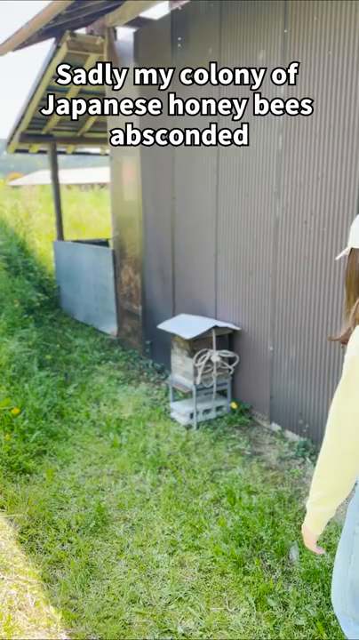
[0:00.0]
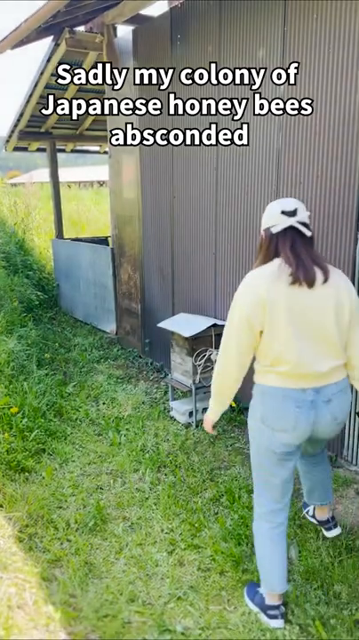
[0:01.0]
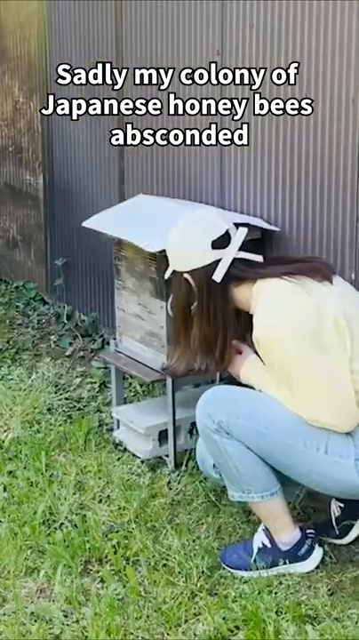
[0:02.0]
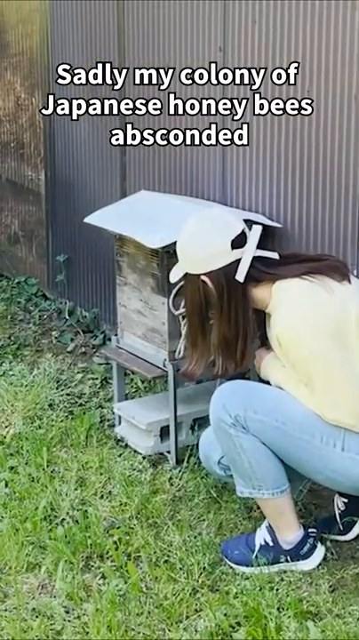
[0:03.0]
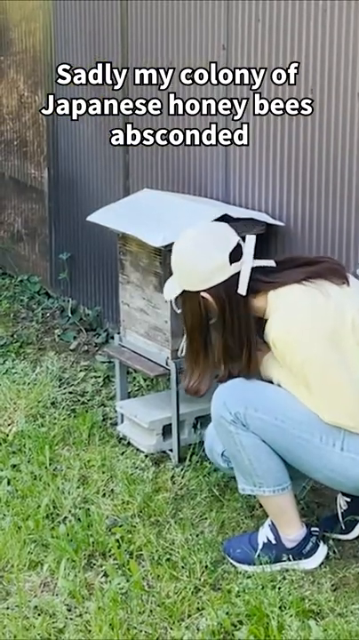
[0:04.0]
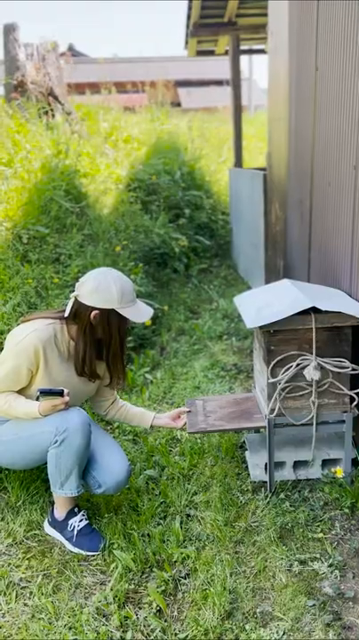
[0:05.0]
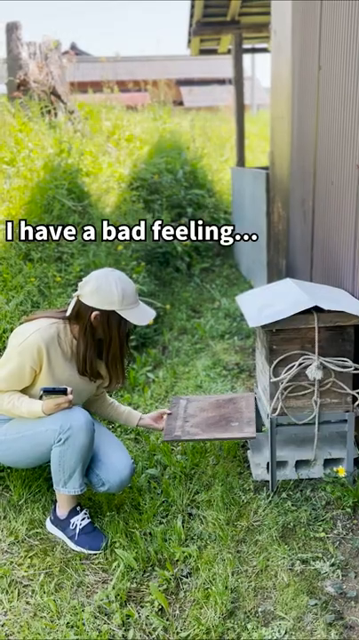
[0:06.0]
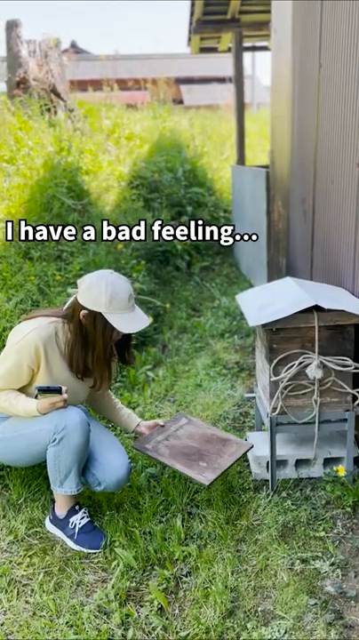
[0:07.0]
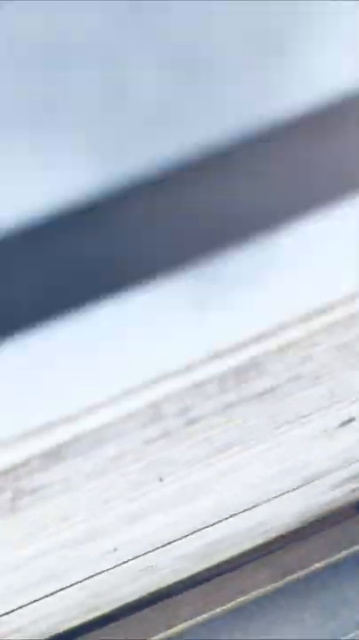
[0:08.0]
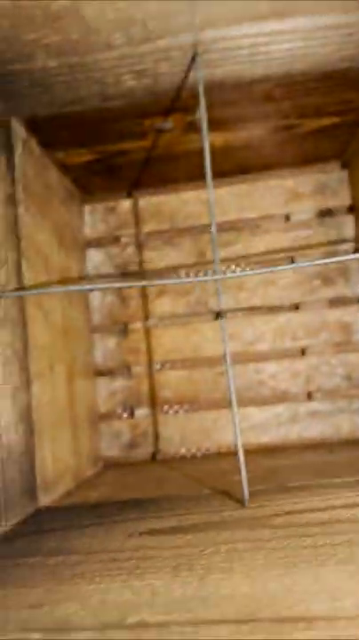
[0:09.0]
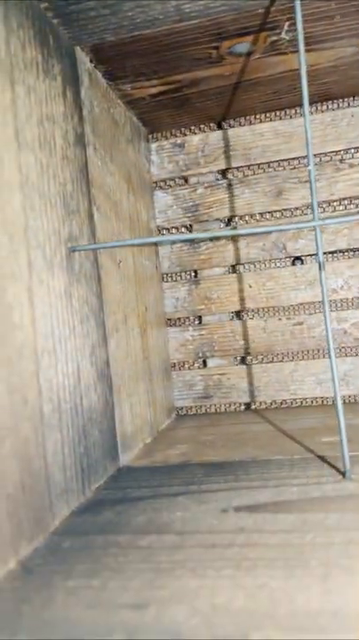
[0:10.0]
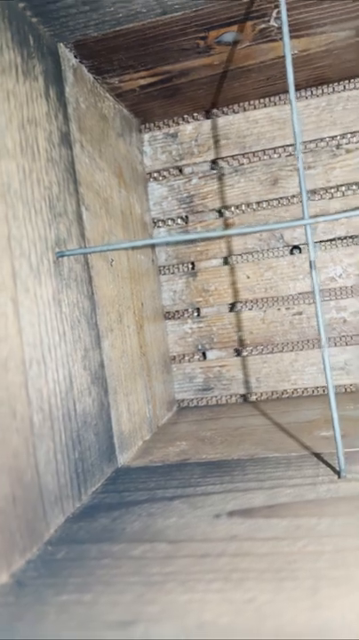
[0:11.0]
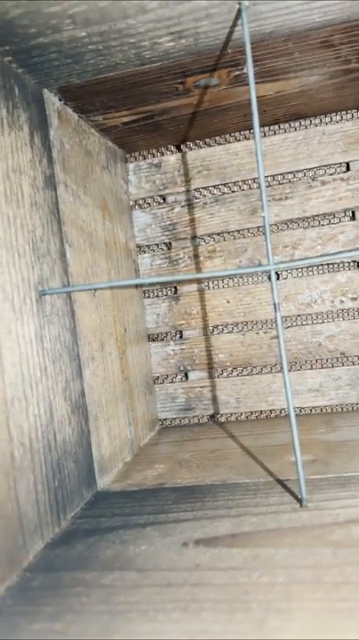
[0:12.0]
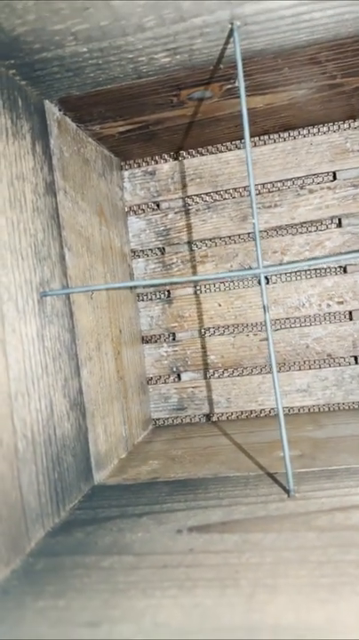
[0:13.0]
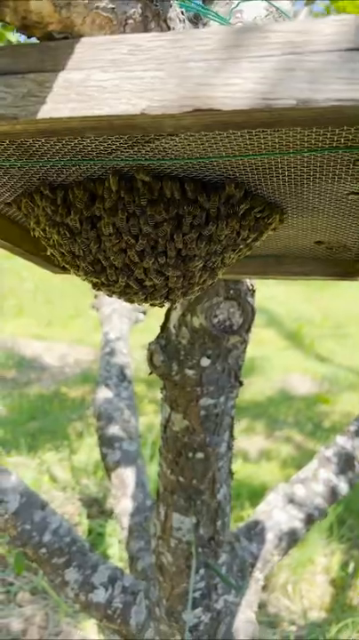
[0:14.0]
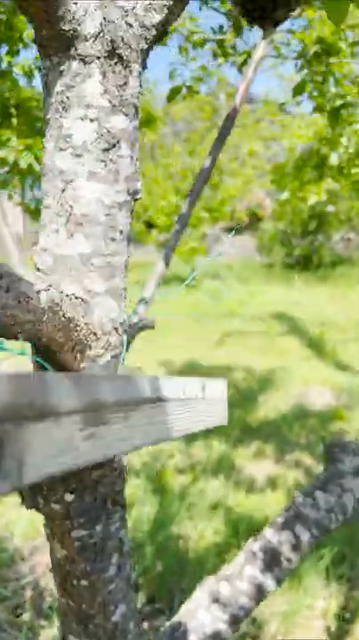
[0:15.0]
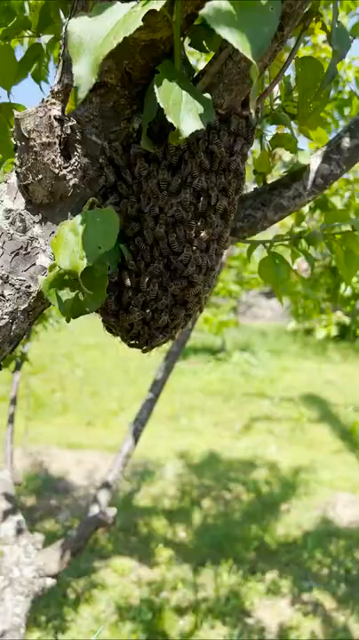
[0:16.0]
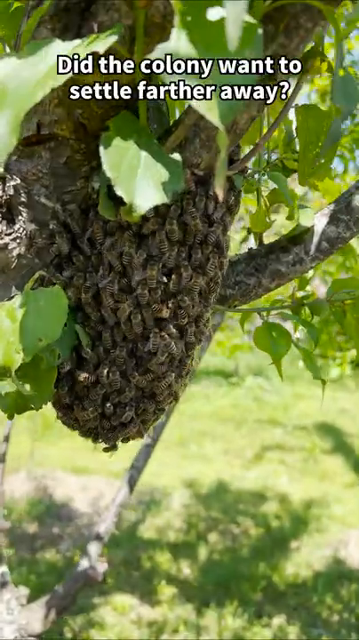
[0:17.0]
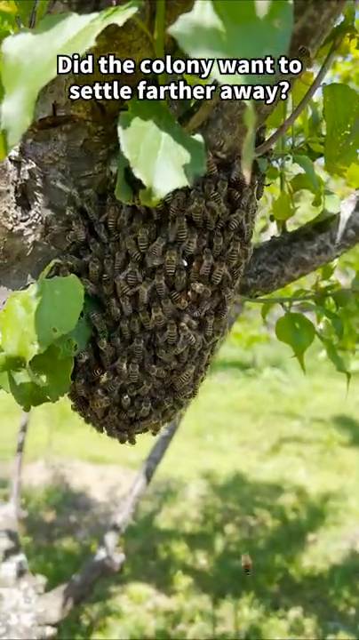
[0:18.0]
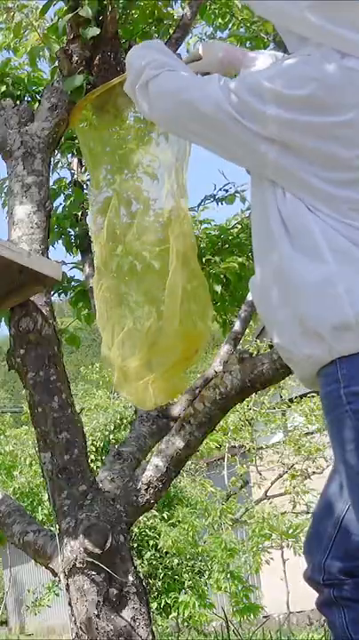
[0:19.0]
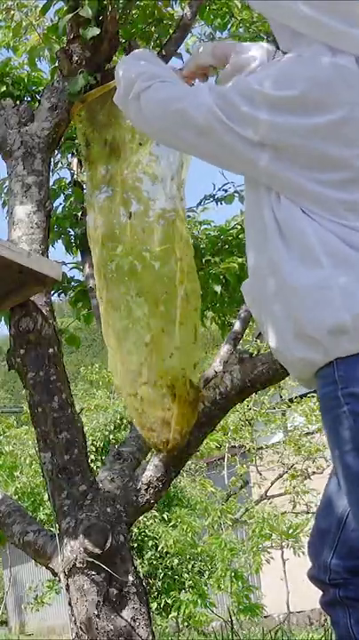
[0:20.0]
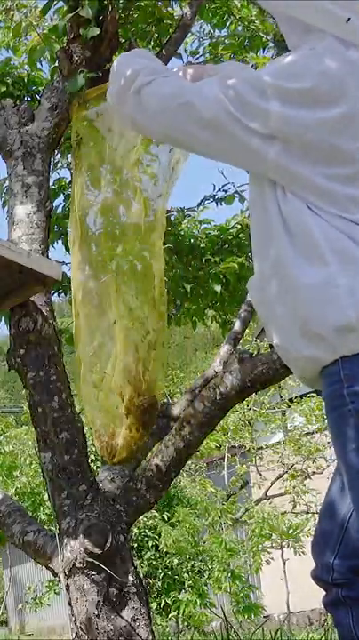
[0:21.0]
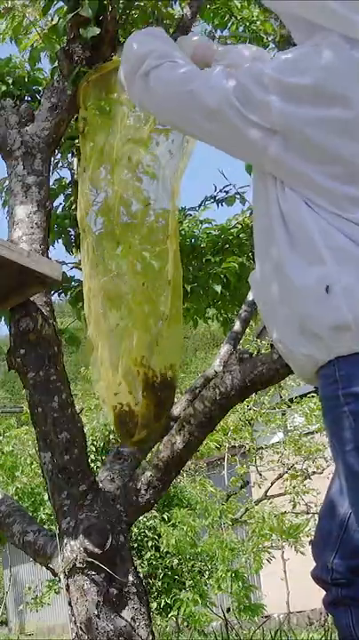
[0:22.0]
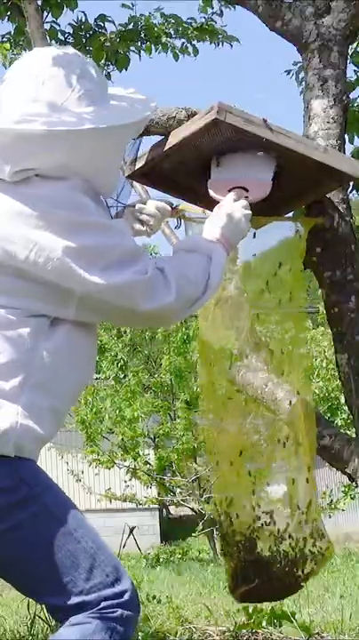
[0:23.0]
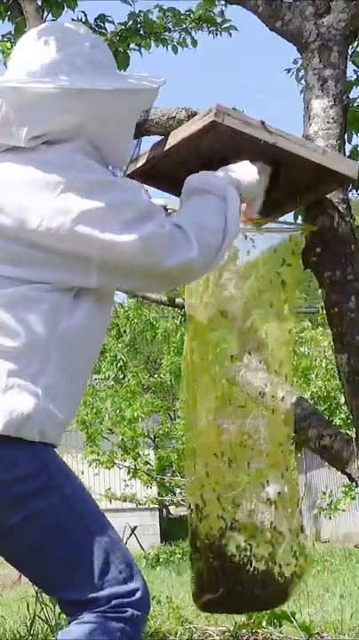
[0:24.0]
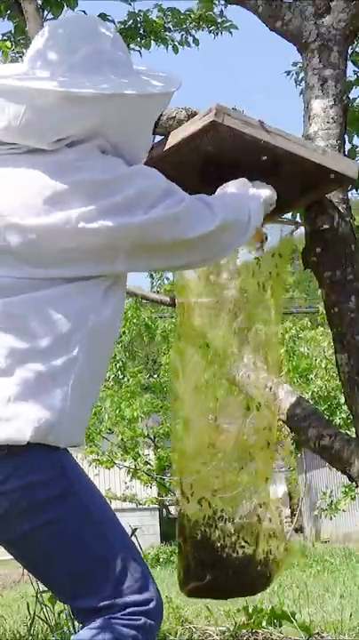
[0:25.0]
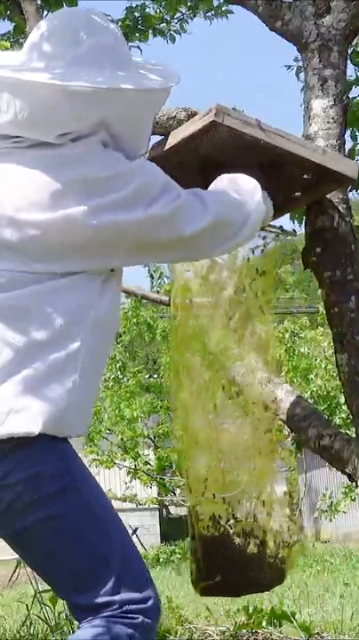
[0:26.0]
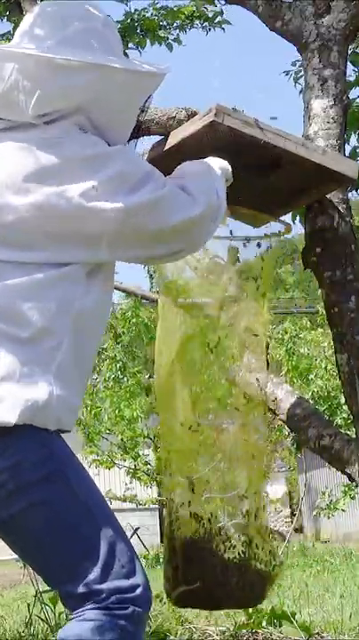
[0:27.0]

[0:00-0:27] The video starts outdoors, apparently on the side of a barn. The barn is gray. At the top of the video, white words say, "Sadly, my colony of Japanese honeybees absconded." A woman walks into the frame, seen from the back. She wears a hat on her head, a yellow shirt, jeans and blue sneakers. She walks over to a box and bends down, and words above her head say, "I have a bad feeling." She takes a tray out of the beekeeper's box and looks inside, and it is empty. She then pans over and sees the bees in the trees, where they have formed a hive-like formation. There is also a set of bees under a tray. Words on the screen say, "Did the colony want to settle farther away?" The view pans over to her; she has white protective gear on, something on her head, and a yellow bag. She goes over to the tree and scoops the bees into the bag, then goes over to the tray, looks under it and scoops those bees into her clear yellow bag as well.